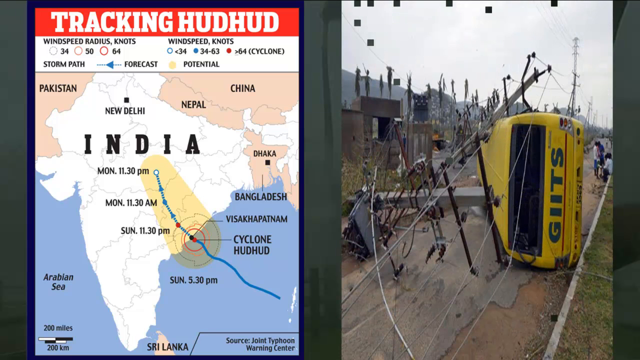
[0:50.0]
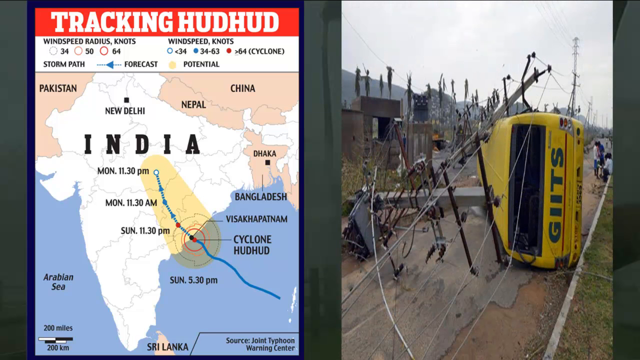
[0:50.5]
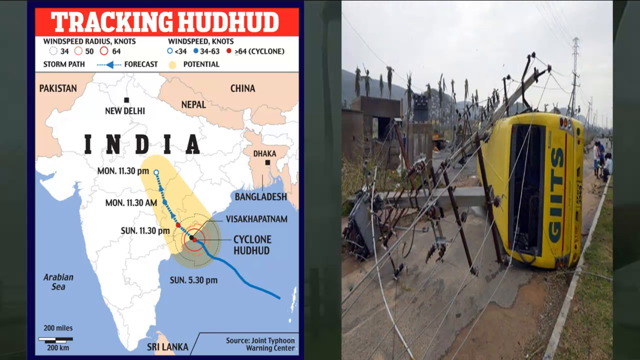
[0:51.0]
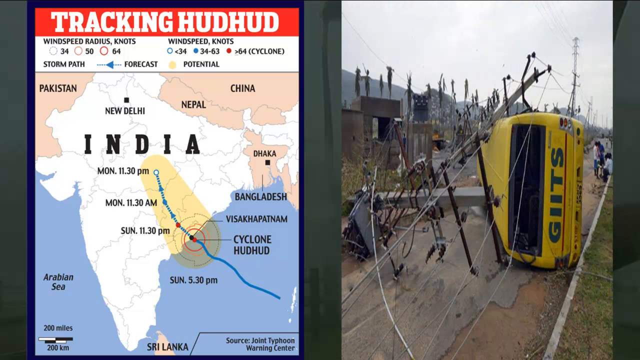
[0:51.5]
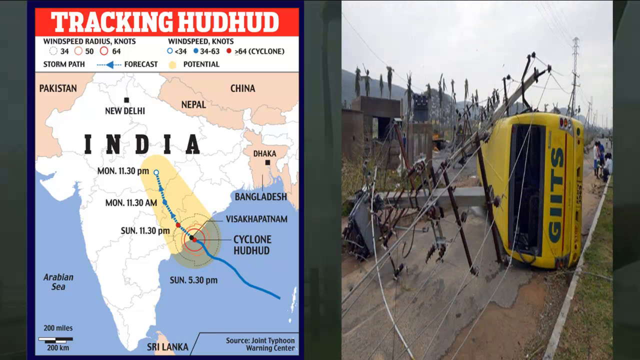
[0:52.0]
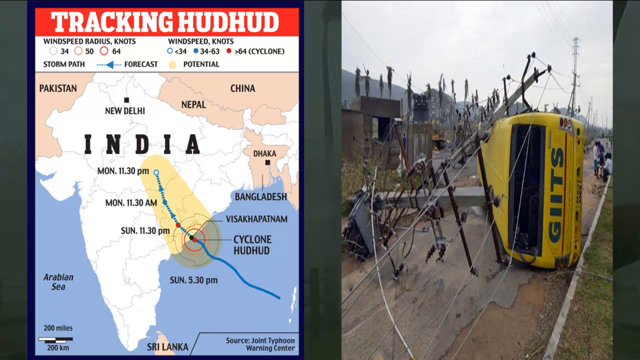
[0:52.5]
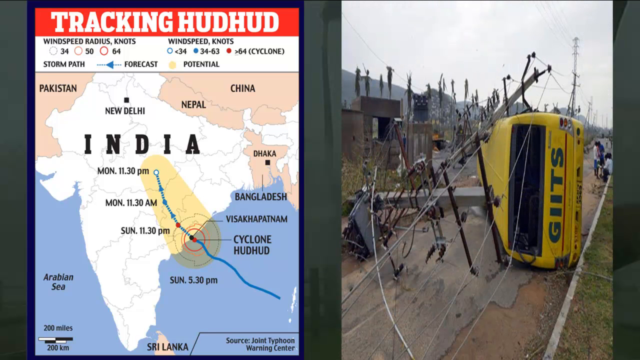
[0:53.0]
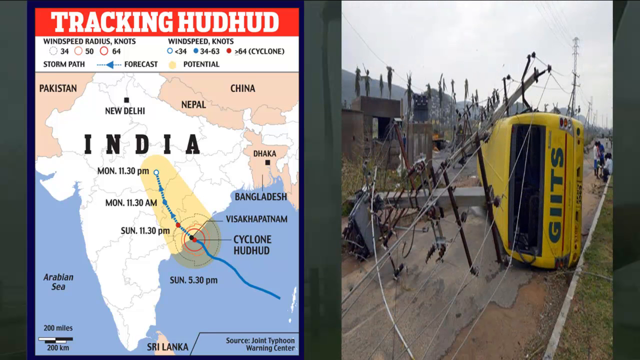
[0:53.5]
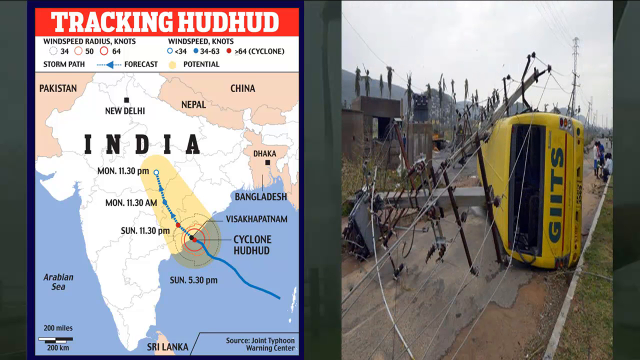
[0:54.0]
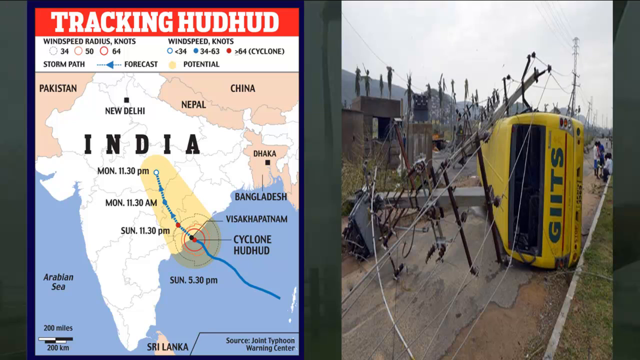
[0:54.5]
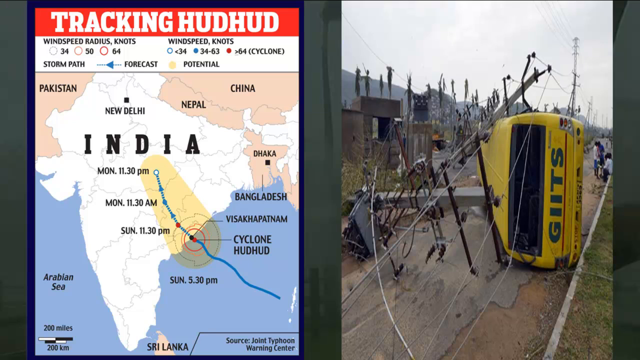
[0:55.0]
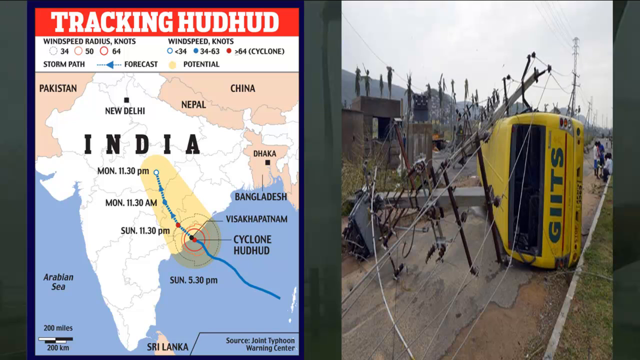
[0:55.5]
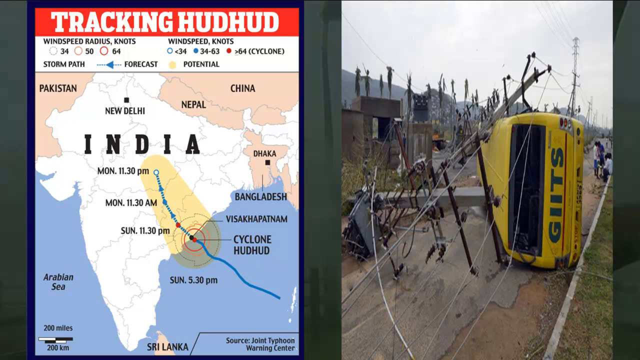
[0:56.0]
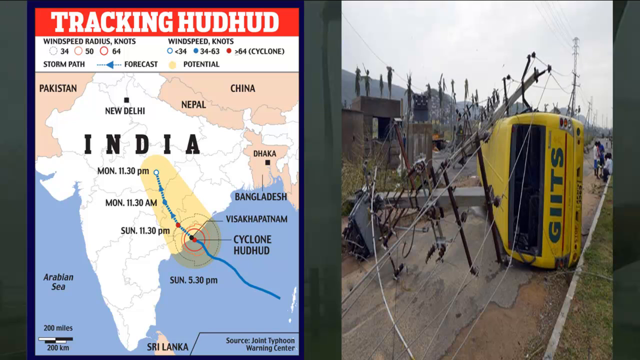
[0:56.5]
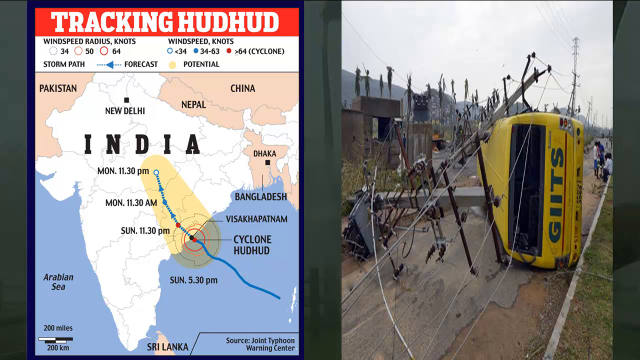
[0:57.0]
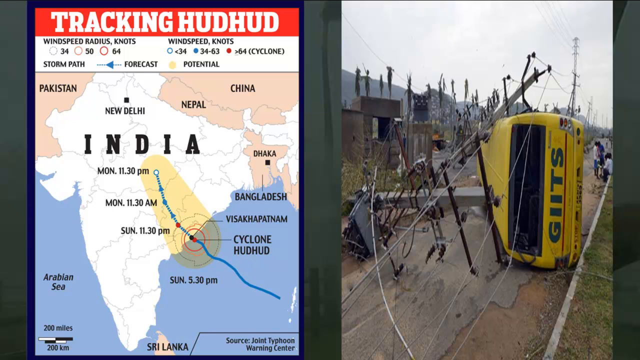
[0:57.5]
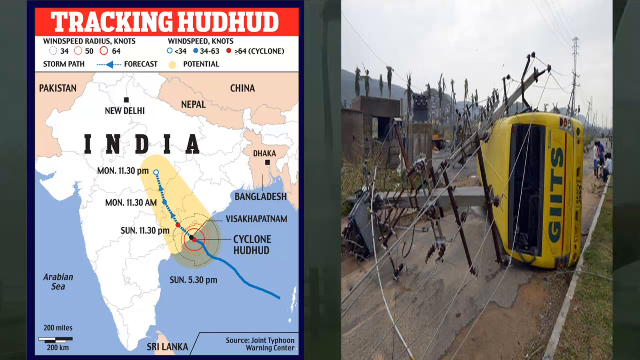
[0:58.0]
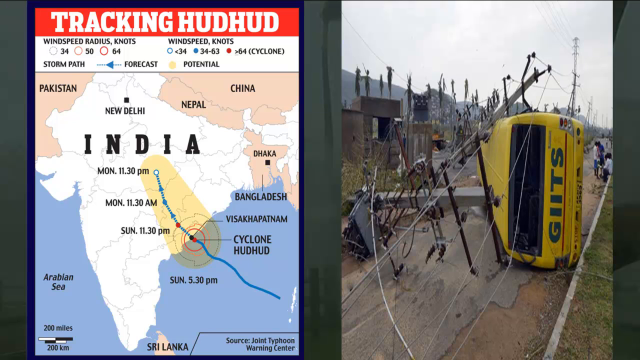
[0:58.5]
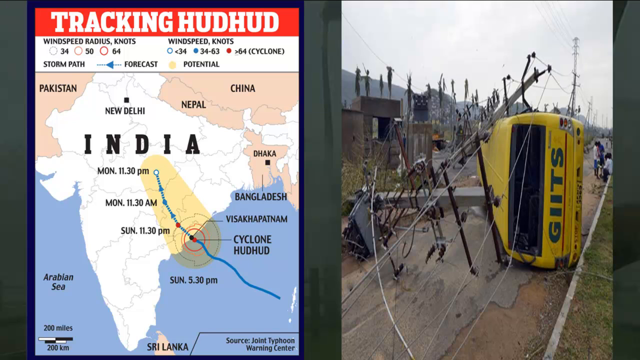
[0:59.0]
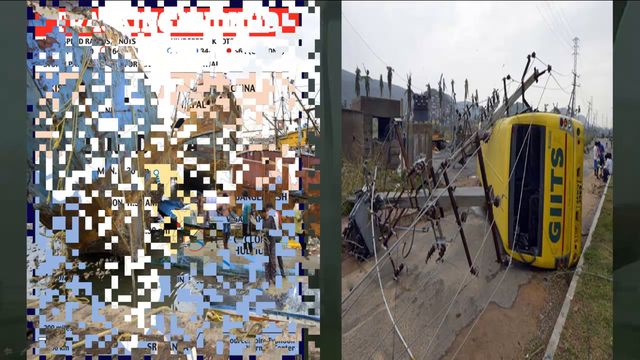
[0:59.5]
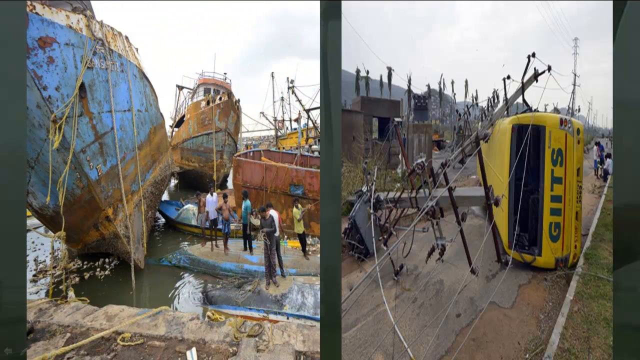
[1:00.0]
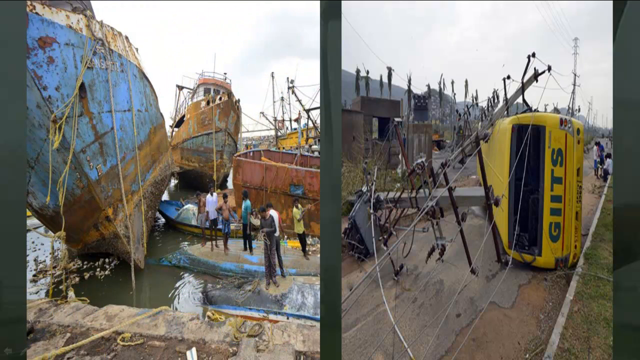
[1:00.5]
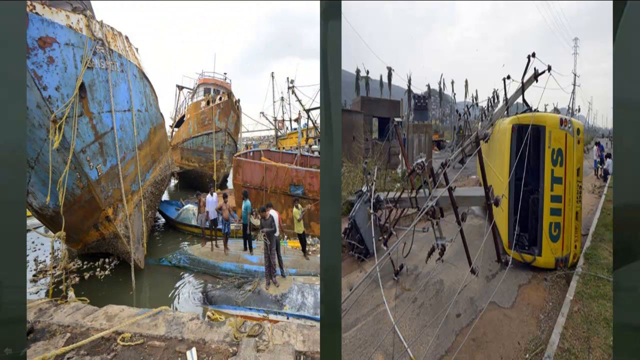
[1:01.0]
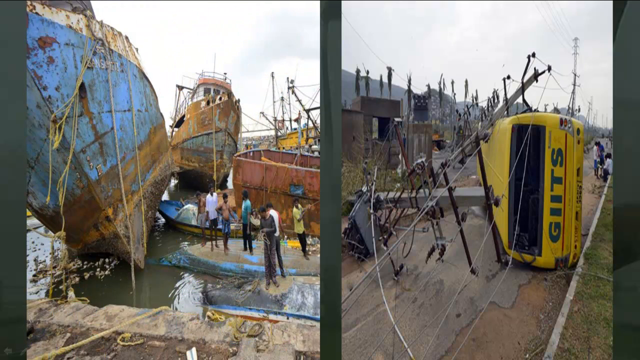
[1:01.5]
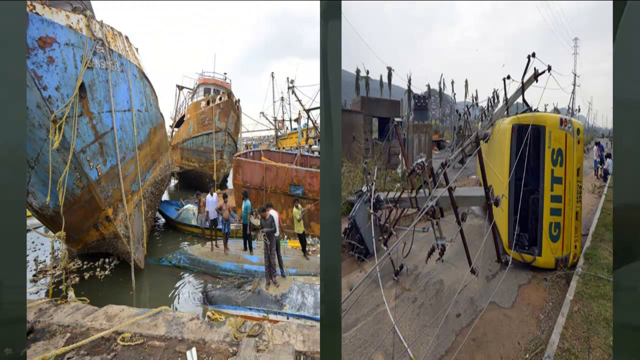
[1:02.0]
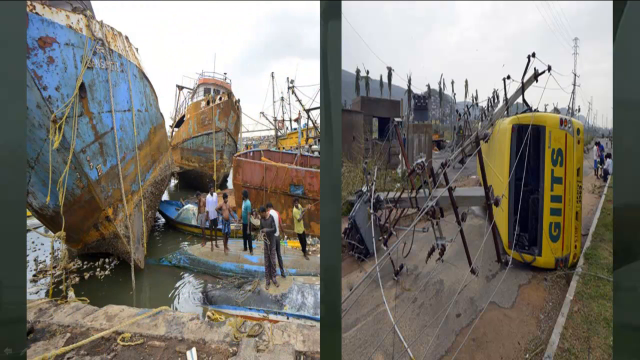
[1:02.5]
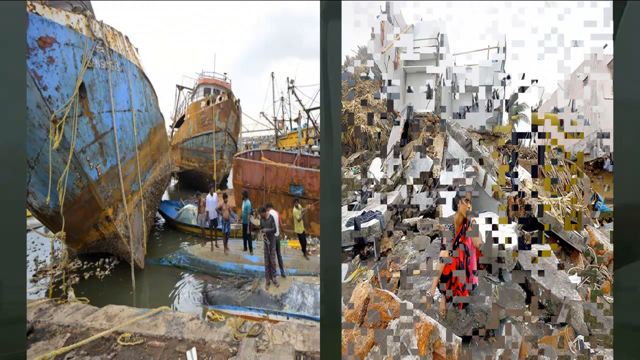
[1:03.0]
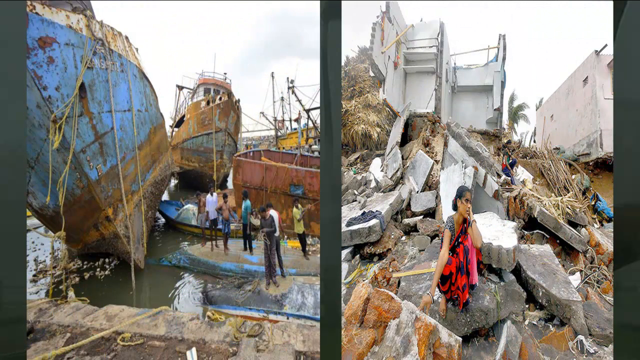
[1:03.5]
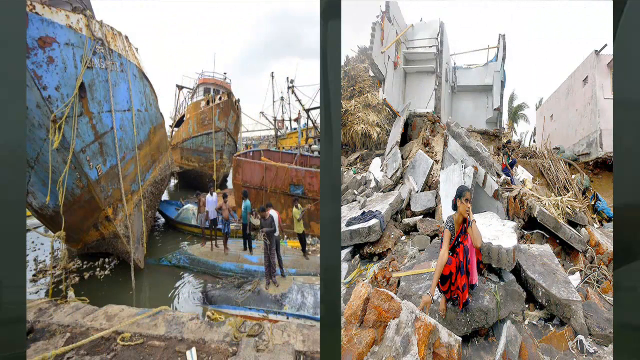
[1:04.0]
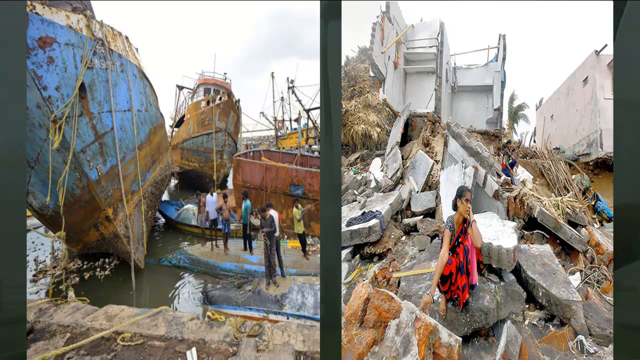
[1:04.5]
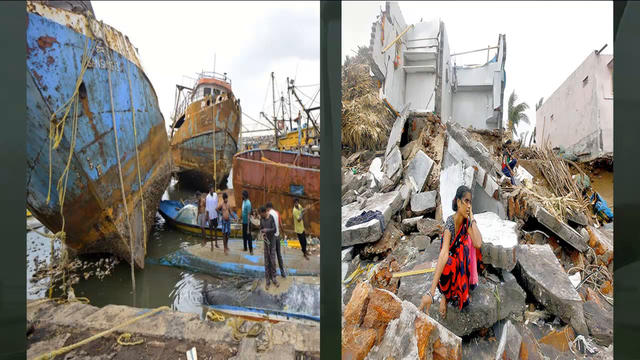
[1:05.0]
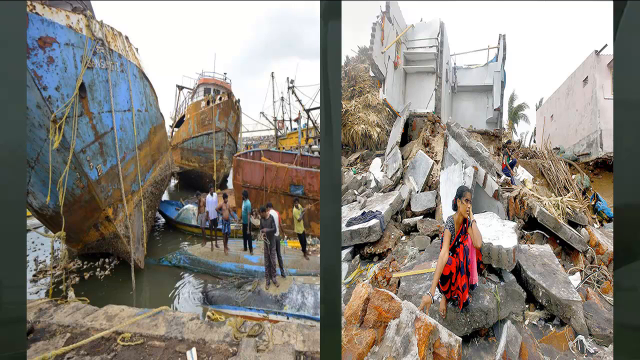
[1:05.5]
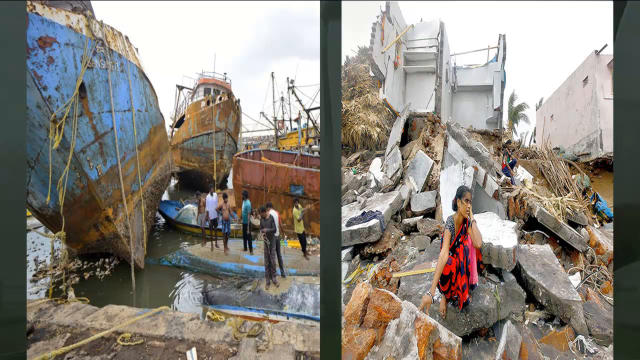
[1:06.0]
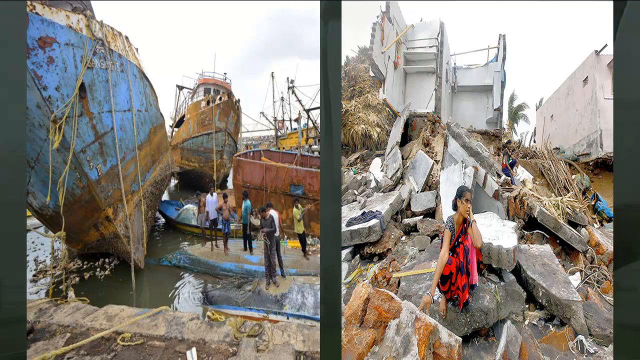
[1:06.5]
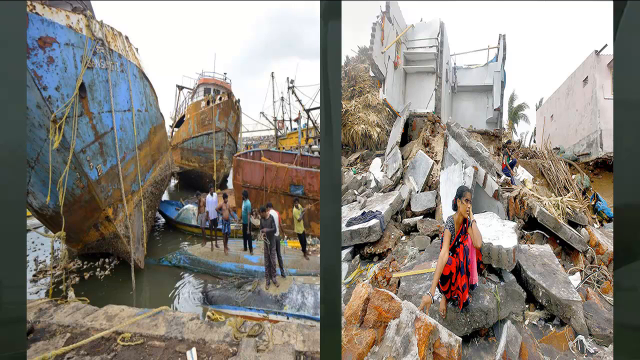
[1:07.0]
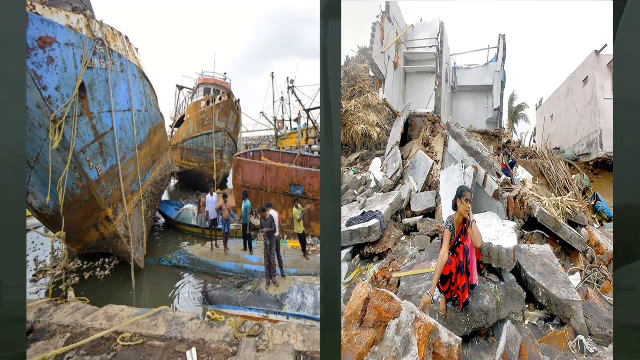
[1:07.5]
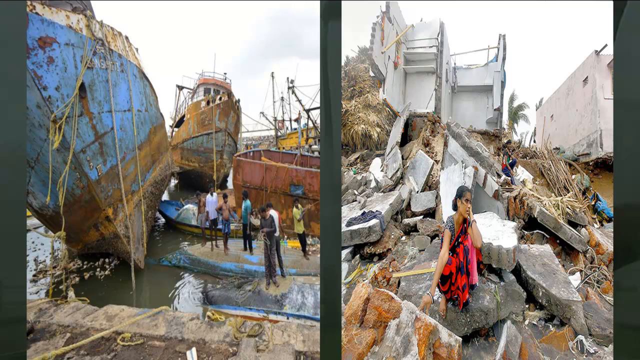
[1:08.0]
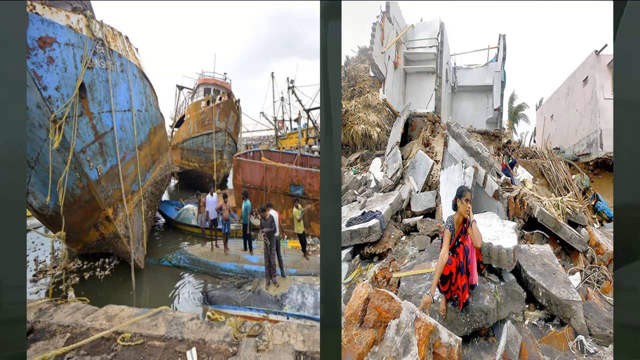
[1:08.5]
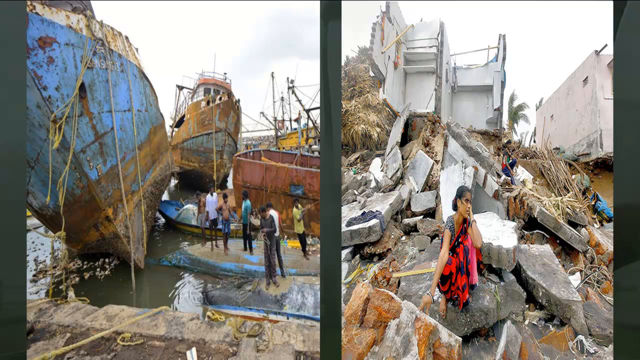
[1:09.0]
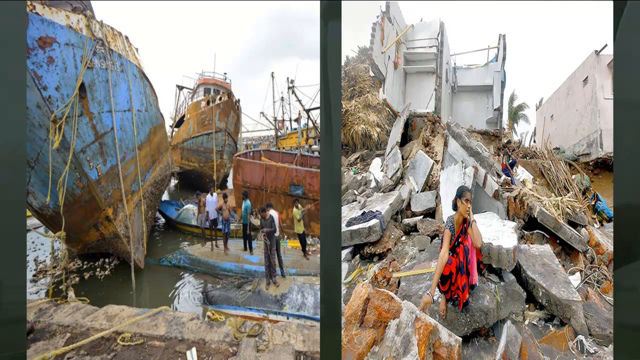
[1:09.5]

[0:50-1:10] A tracking chart shows a cyclone entering India: it enters India on Sunday and is in Central India on Monday, impacting a large part of the country. A blue line marks the forecast of the storm path, and the potential radius is shown in yellow. Labels for wind speed radius in knots and wind speed in knots are visible. On the right, a power grid is shown destroyed by the cyclone. Next, on the left, some very big boats appear to have been knocked out of the water, with a couple of people close to them. On the right side, another image shows the tragic result of the cyclone: a family's house has been destroyed, and a woman and a couple of children are sitting on the rocks of their house.